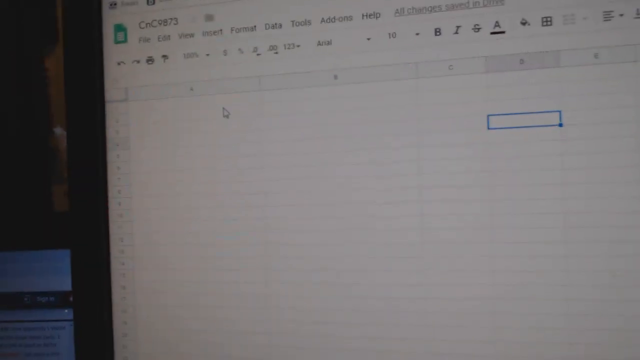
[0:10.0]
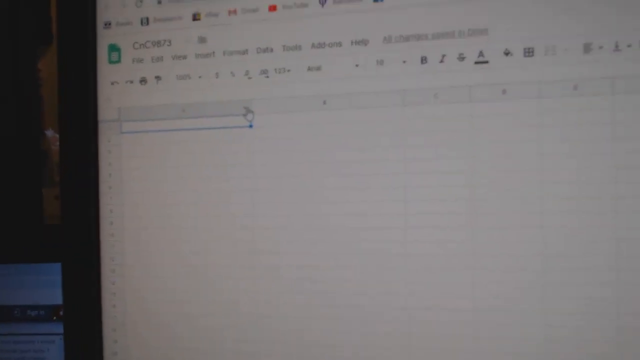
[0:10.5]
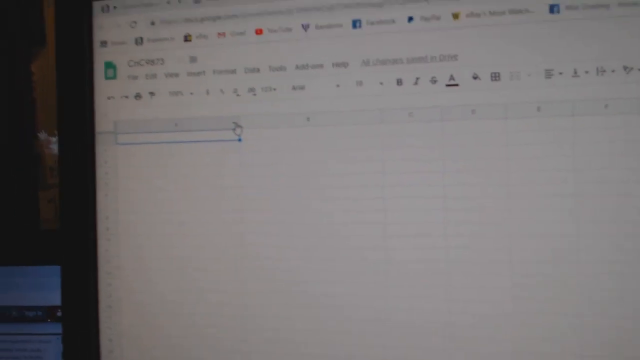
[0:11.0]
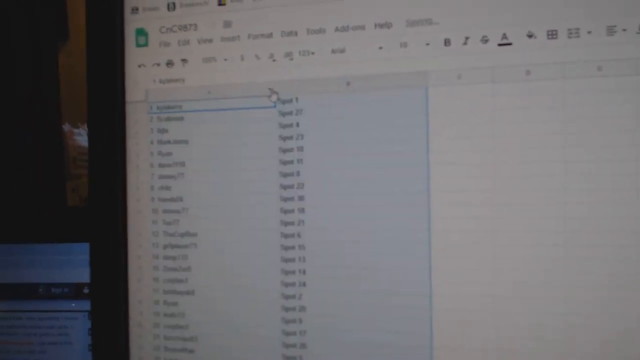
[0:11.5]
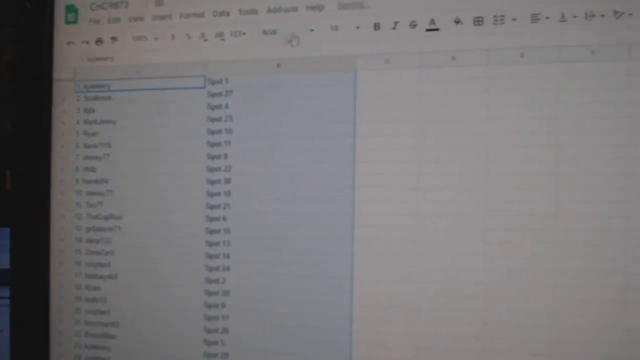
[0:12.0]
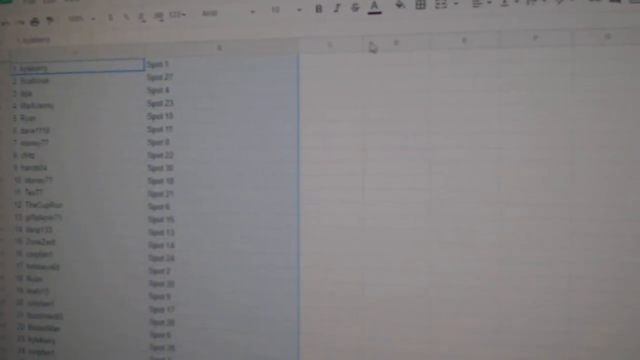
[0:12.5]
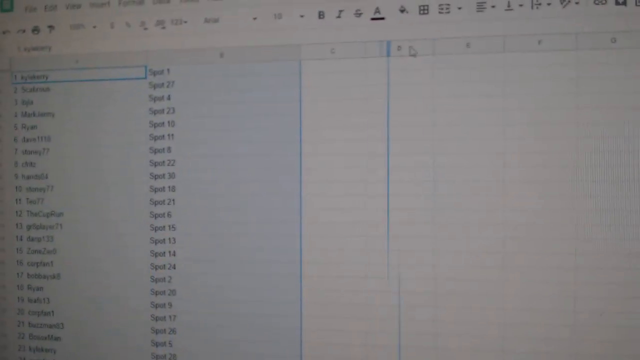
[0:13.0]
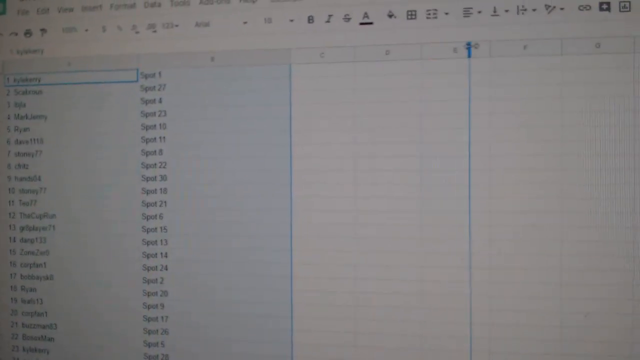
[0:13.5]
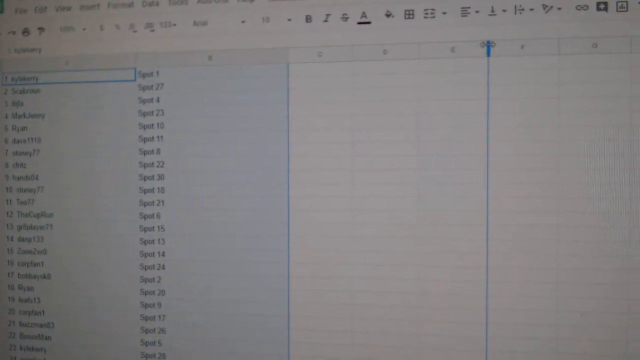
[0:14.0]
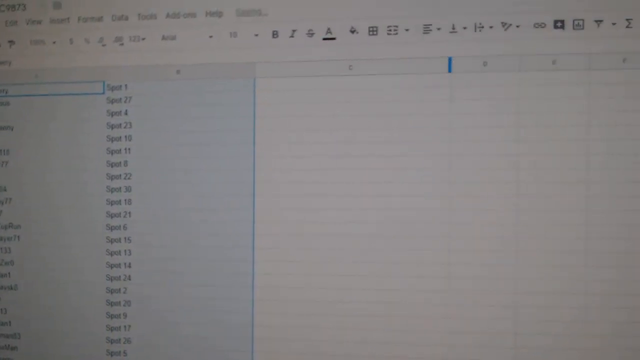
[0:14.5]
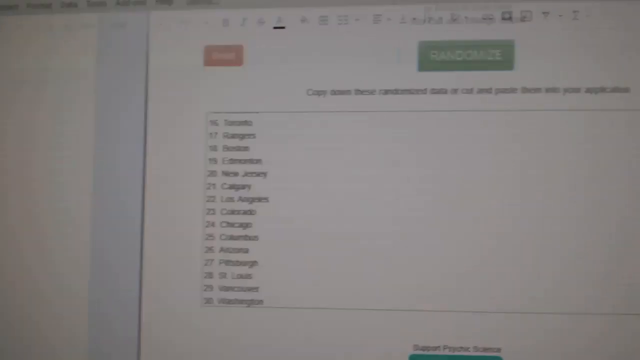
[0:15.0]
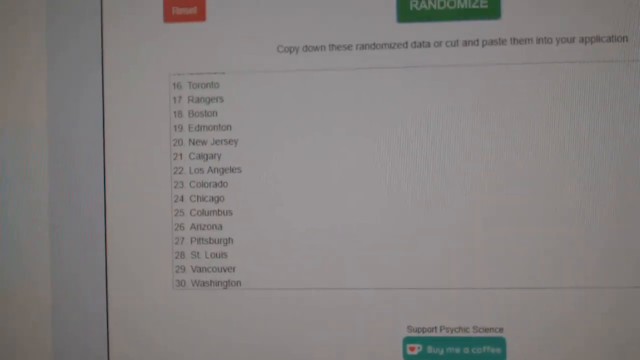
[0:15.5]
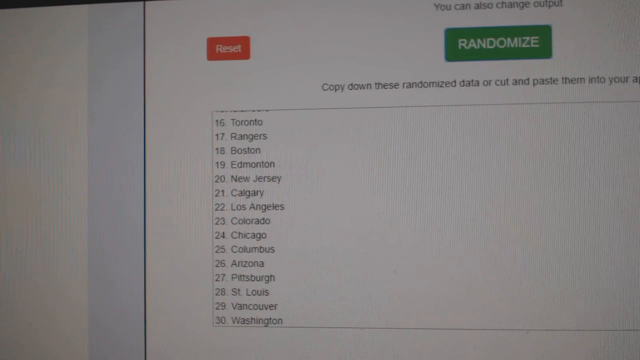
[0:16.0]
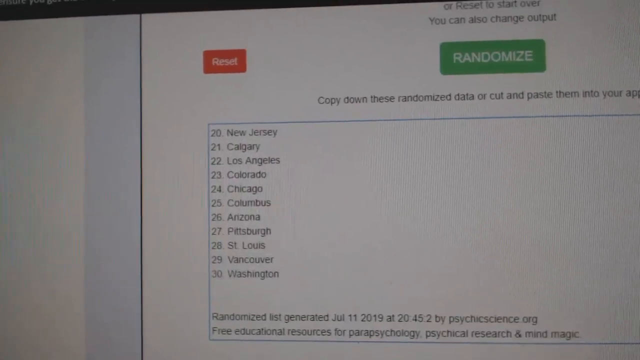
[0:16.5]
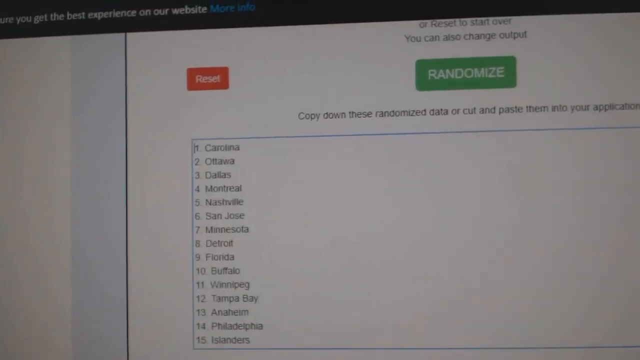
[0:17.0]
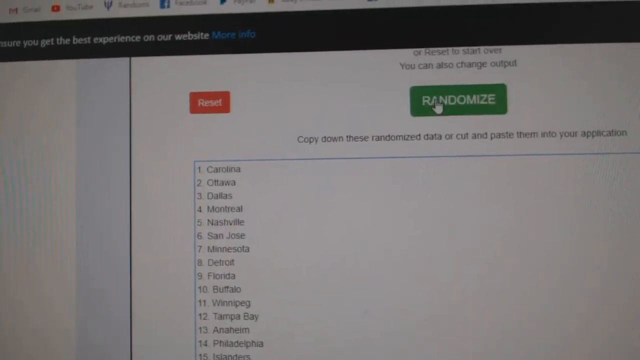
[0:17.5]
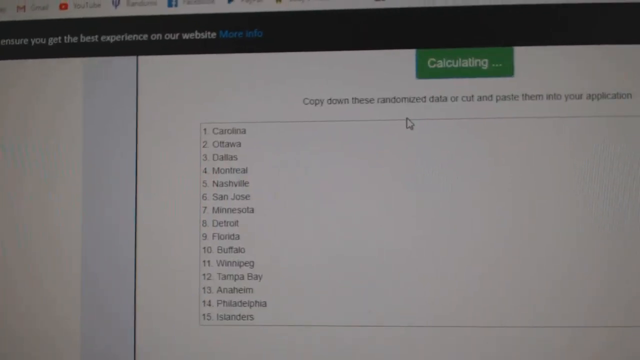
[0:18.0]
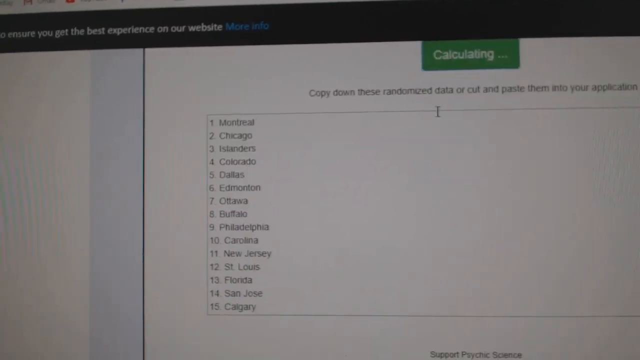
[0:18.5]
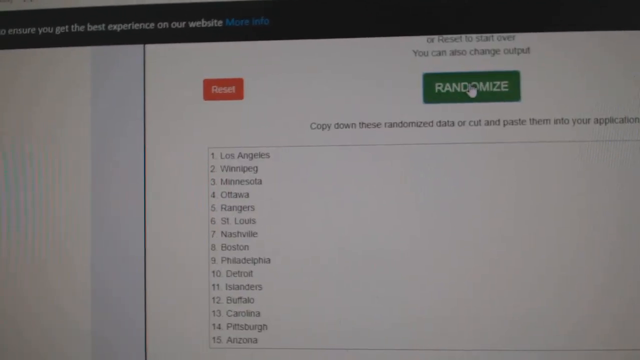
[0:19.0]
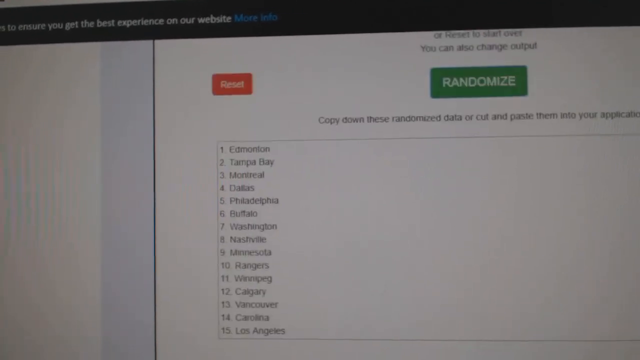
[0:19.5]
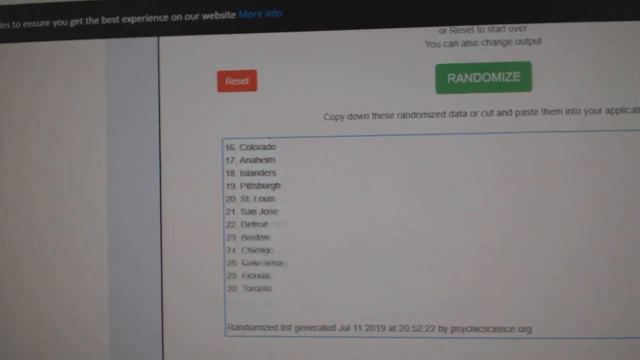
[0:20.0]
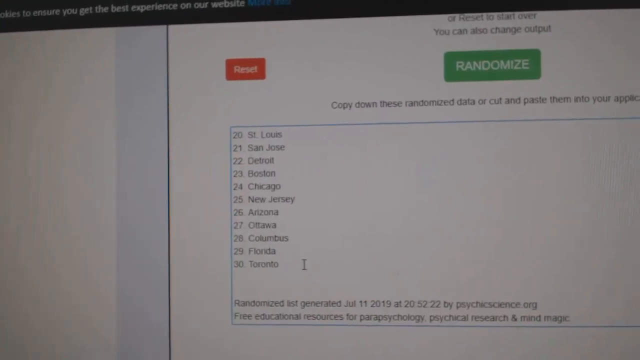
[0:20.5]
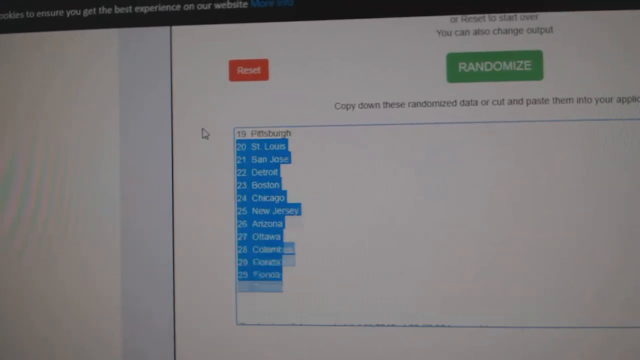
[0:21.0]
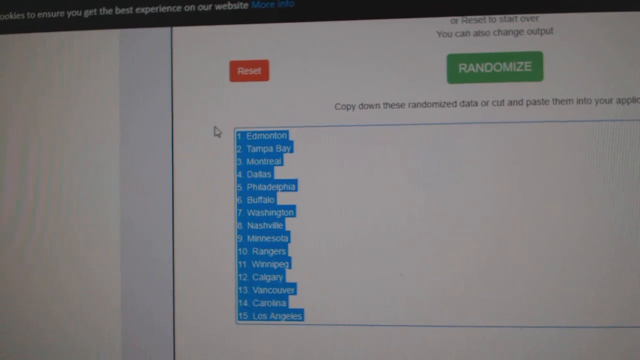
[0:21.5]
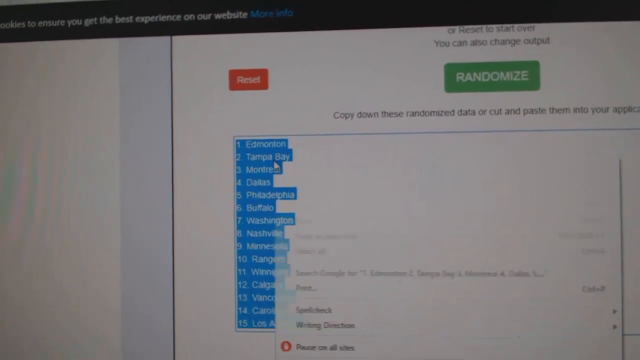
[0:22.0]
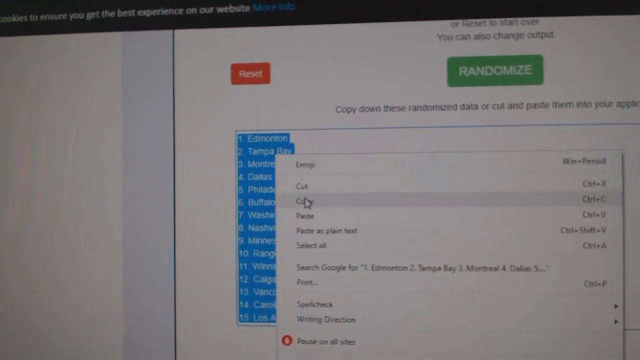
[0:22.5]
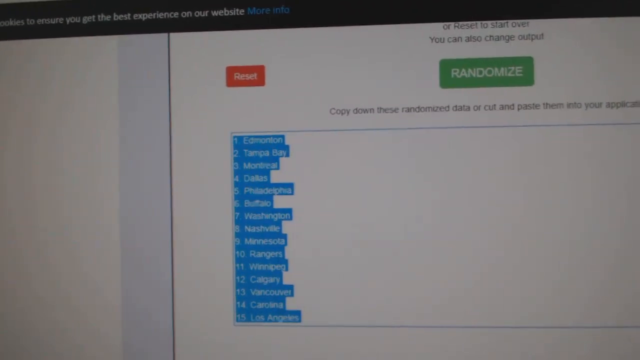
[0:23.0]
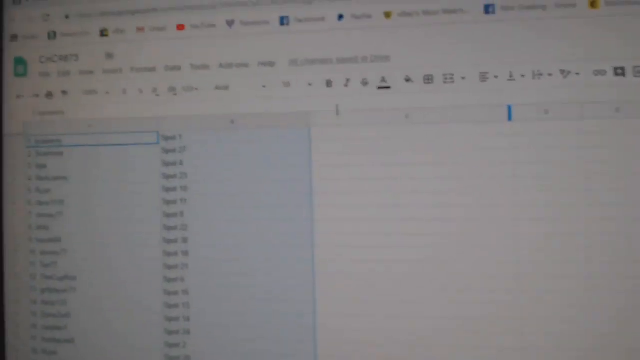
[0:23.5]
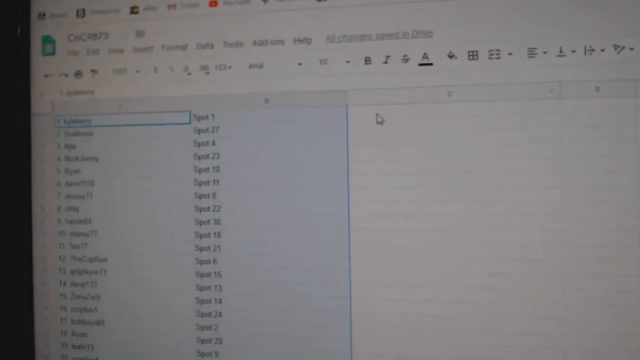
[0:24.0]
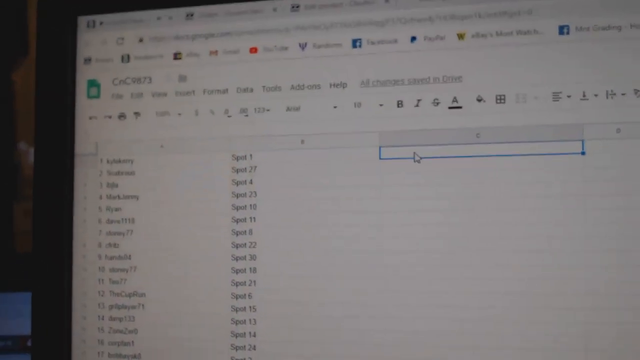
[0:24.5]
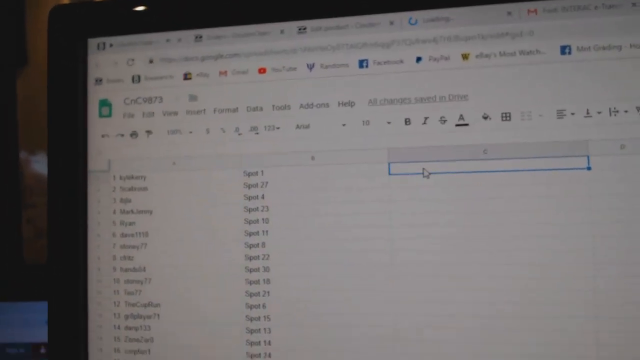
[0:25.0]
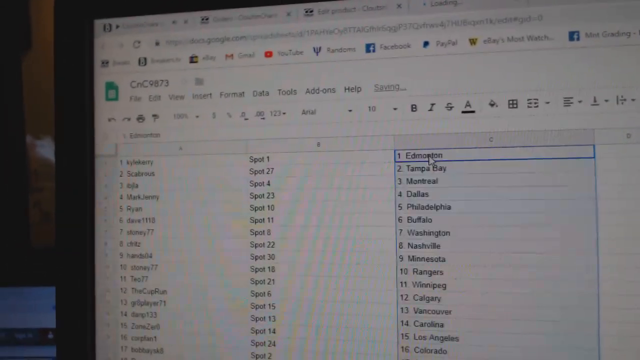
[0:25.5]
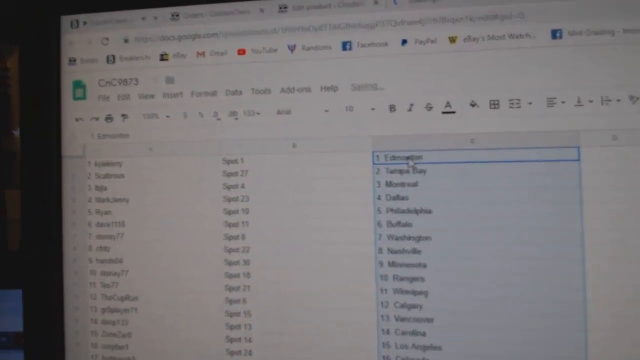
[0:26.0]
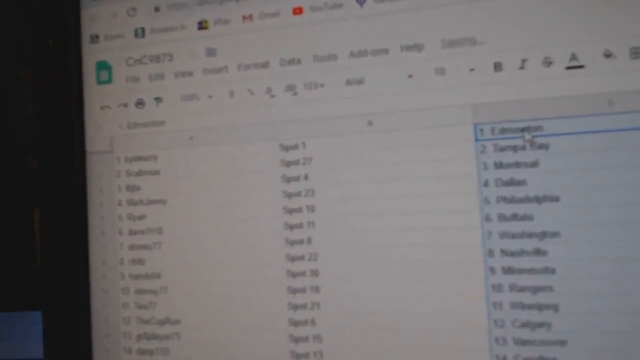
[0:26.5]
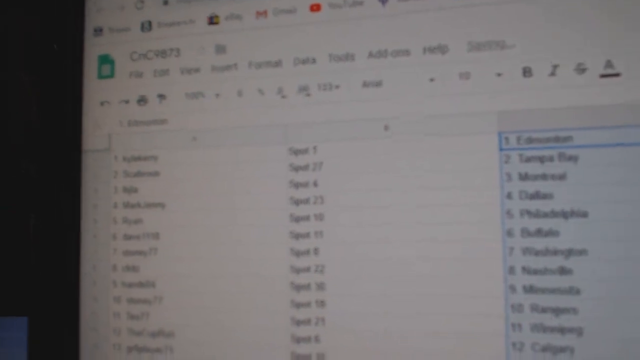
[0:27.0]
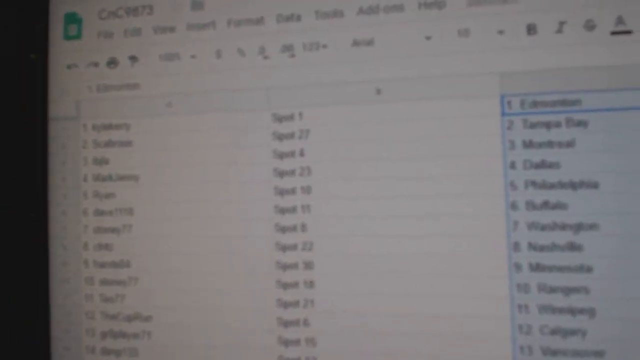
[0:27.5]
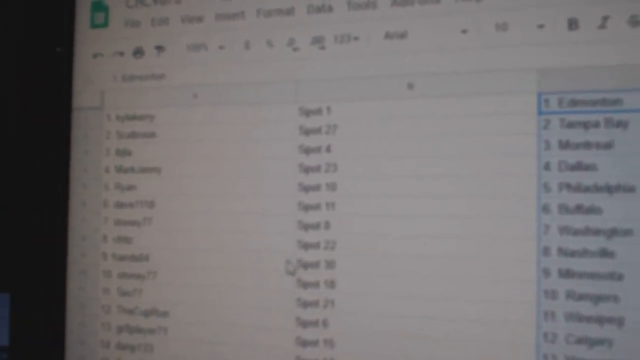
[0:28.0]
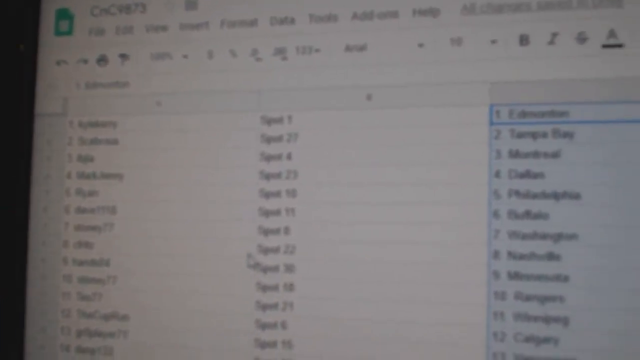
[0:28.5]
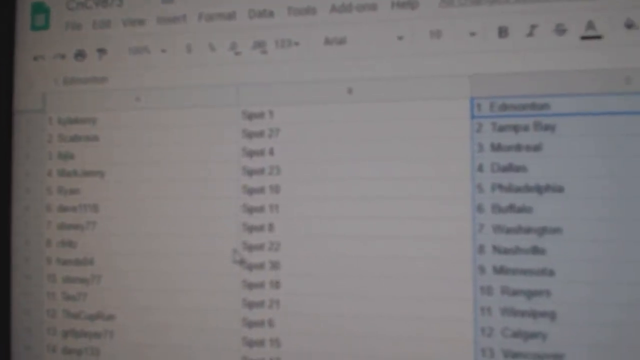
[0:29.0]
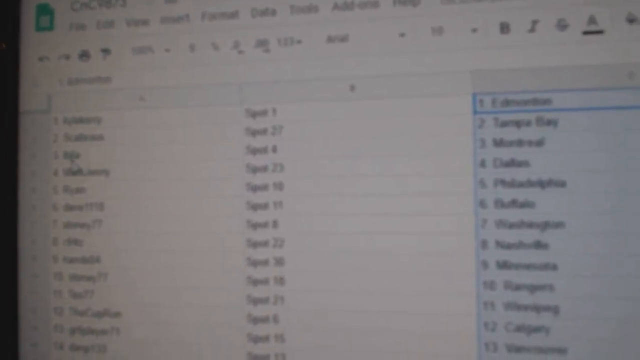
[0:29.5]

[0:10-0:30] A worksheet is open on a computer. The names are randomized and scrolled through, then copied, and the view moves to the column where the copied names are to be placed. Along the top are menu options for views, format, data, tools, add-ons and help, and the columns are labeled A, B, C, D and E.